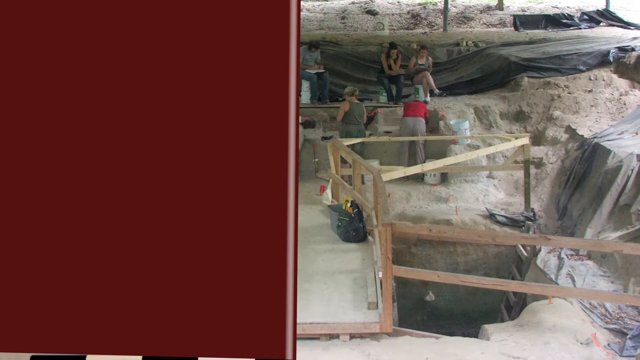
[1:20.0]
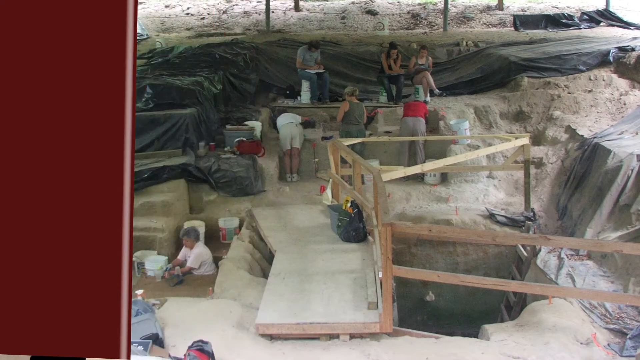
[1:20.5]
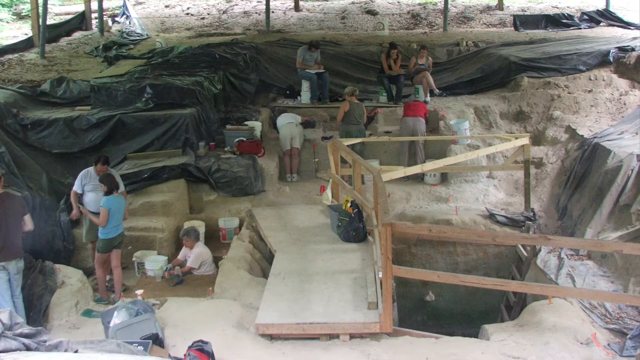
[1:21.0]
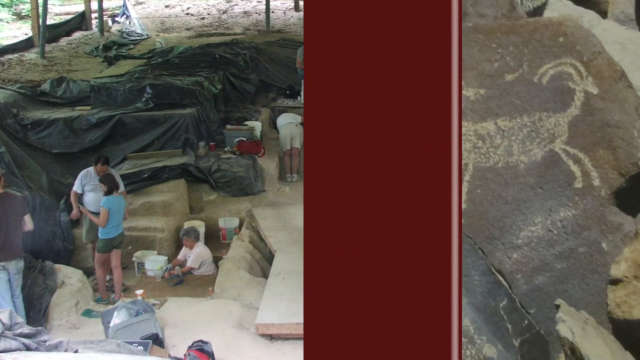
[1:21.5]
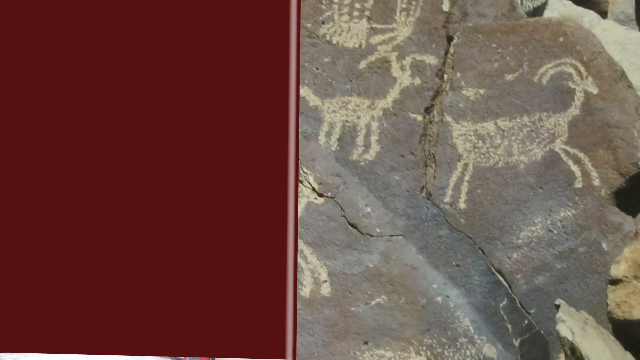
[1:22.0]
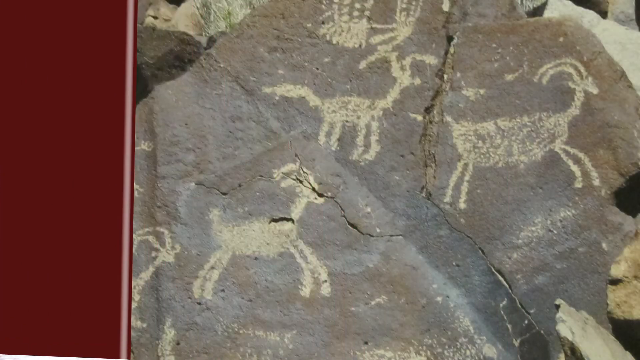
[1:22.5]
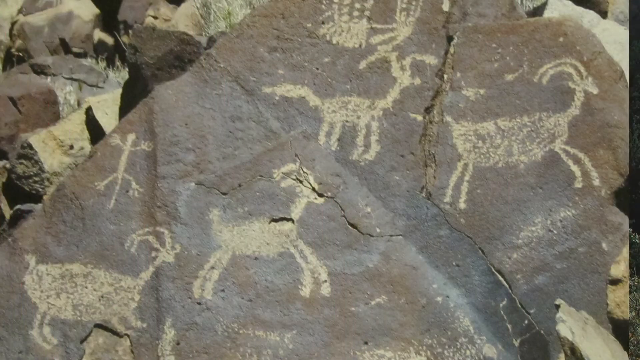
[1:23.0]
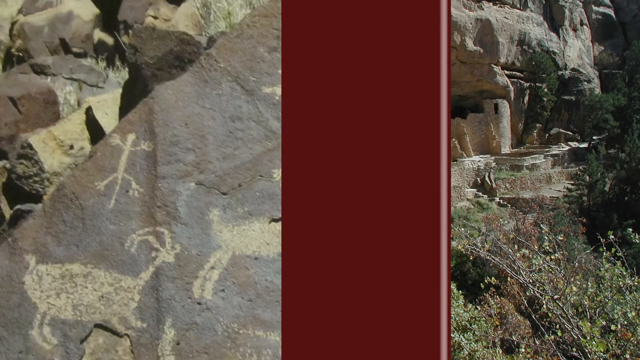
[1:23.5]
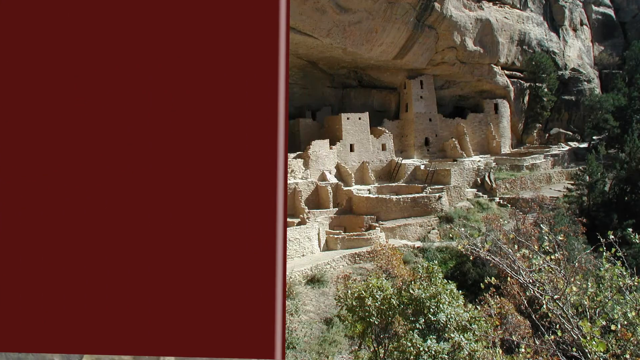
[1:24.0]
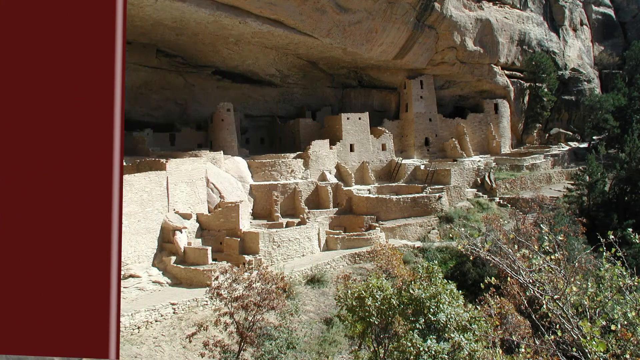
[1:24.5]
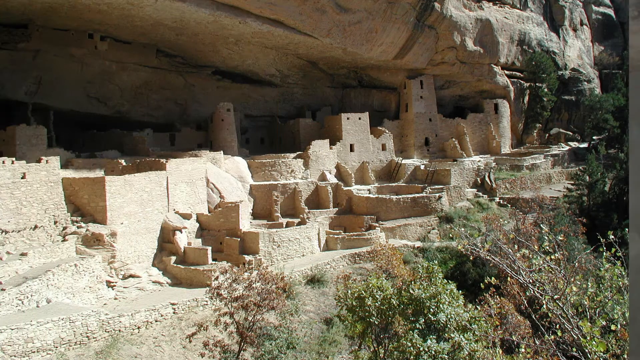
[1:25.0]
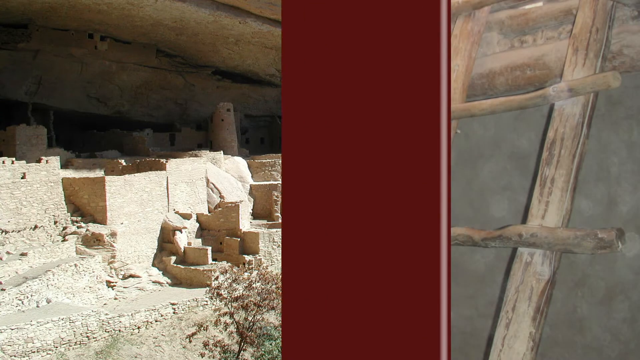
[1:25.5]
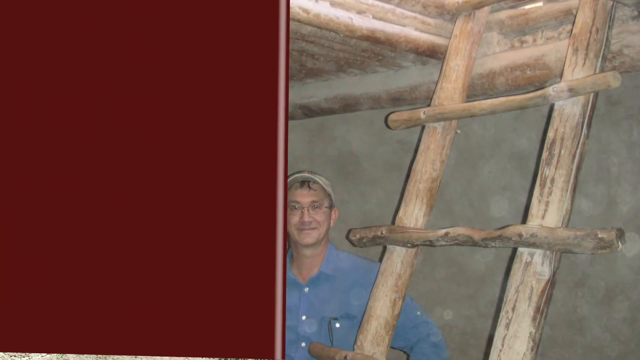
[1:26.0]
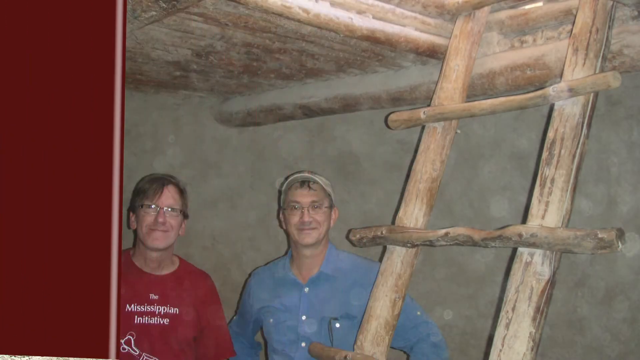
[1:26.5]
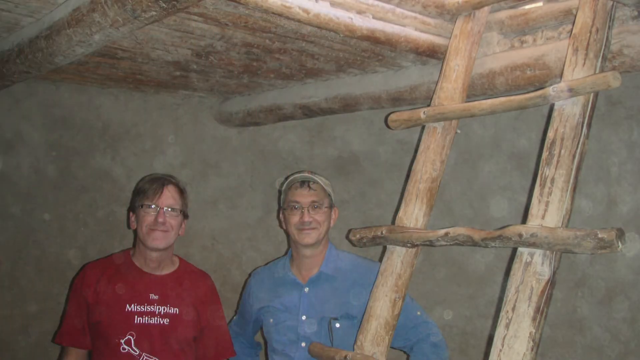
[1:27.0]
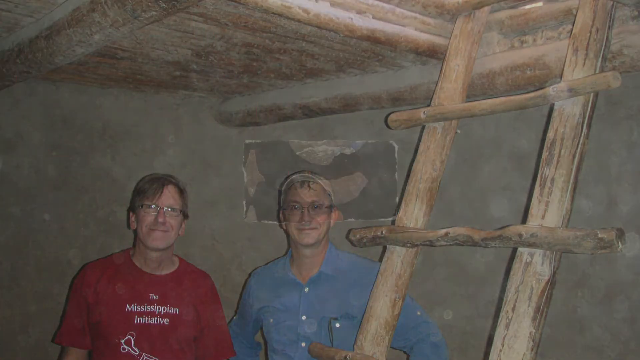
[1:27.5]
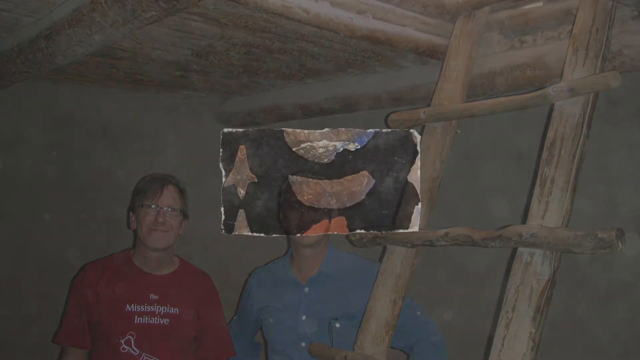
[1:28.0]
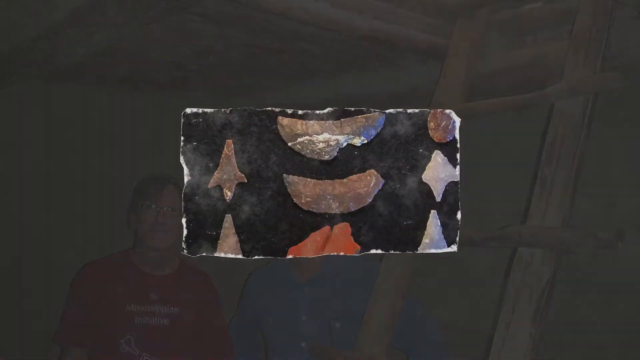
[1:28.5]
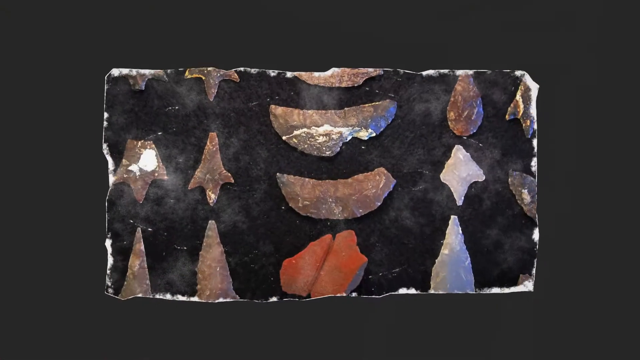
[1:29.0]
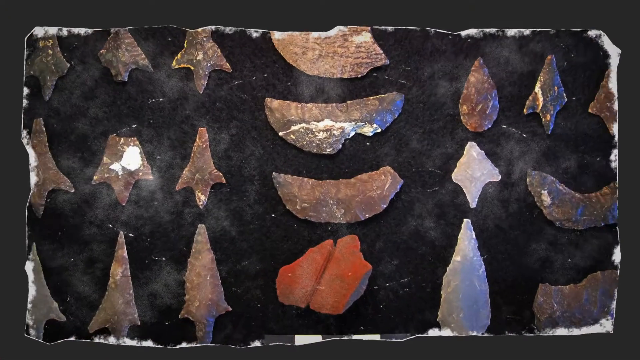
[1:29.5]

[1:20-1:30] A photograph of the archaeological dig appears, with the screen divided into rough halves: a simple maroon background on the left, and on the right a view from above of several archaeology students sitting in chairs, pondering something in front of them, possibly sifting. Two or three dig workers stand just below them with their backs to the camera. The area is covered in plastic sheeting and delineated by pieces of wood forming crude fences. Various views of the dig follow: a rock with ancient drawings, a town, two men standing to the left of a ladder, and some flint pieces.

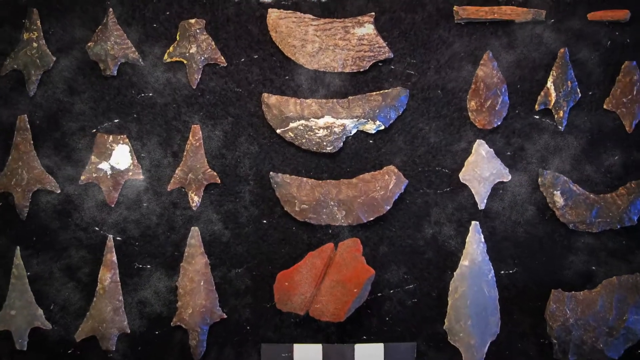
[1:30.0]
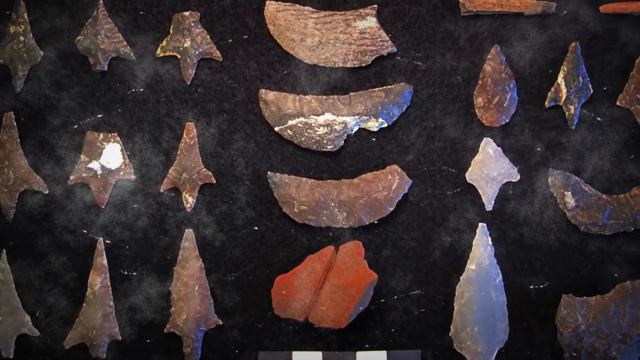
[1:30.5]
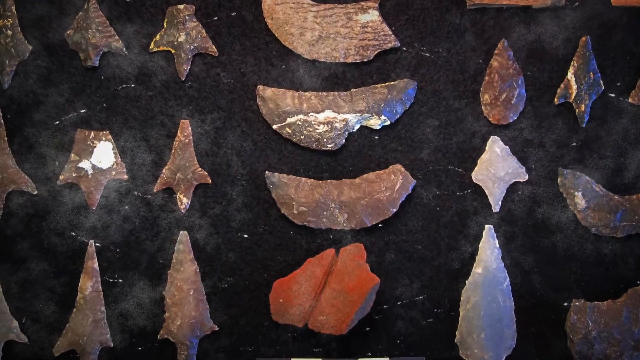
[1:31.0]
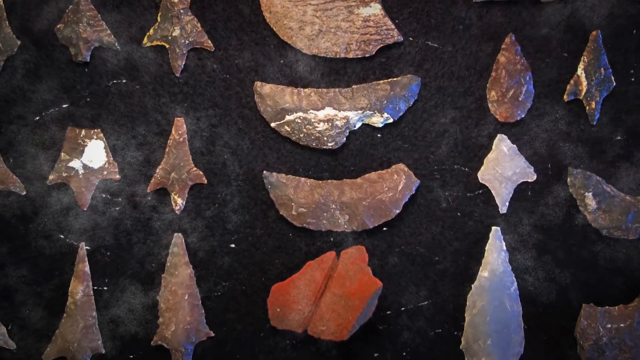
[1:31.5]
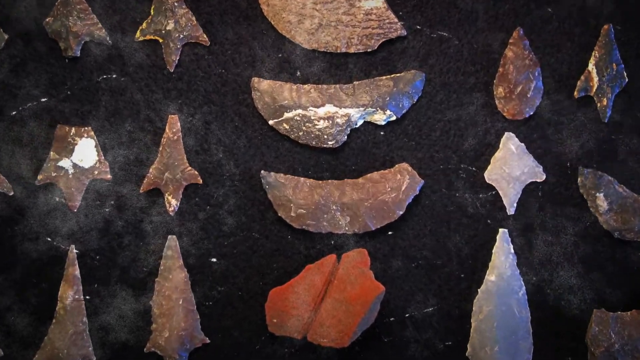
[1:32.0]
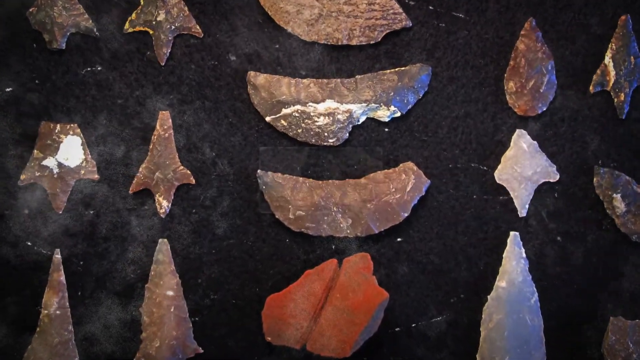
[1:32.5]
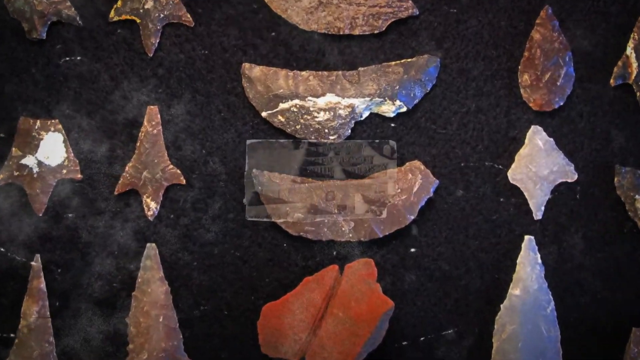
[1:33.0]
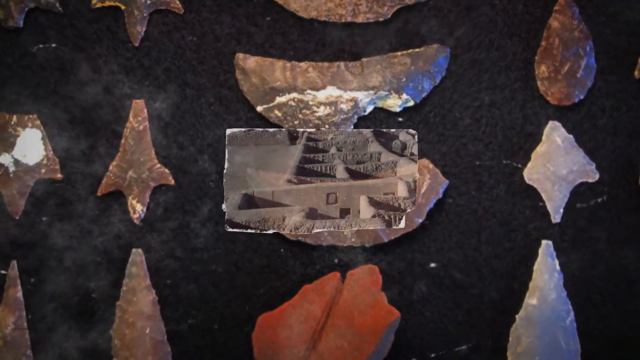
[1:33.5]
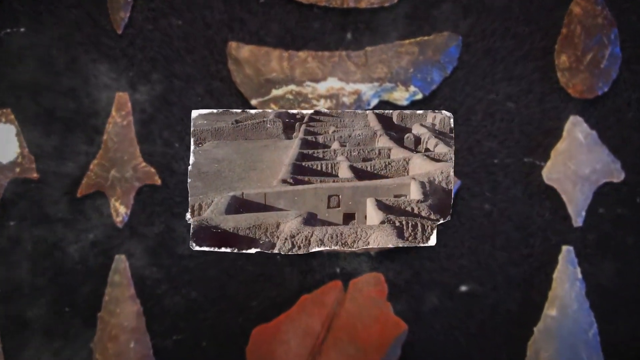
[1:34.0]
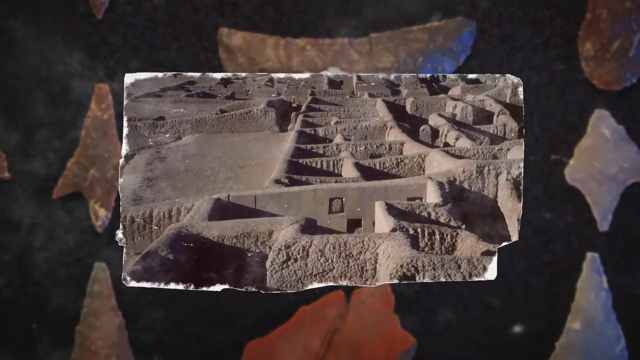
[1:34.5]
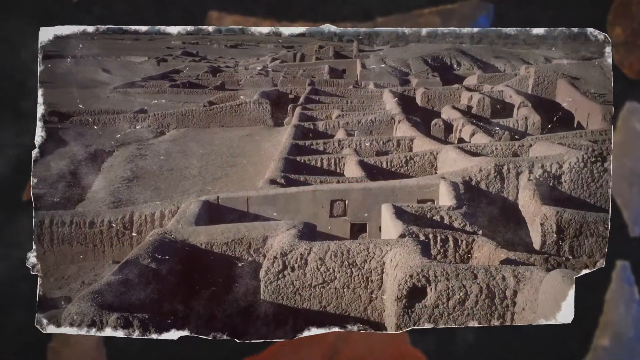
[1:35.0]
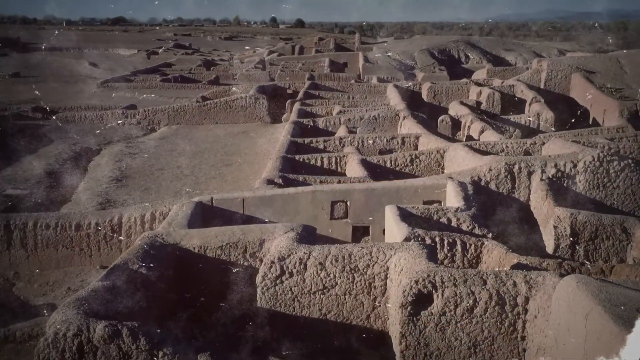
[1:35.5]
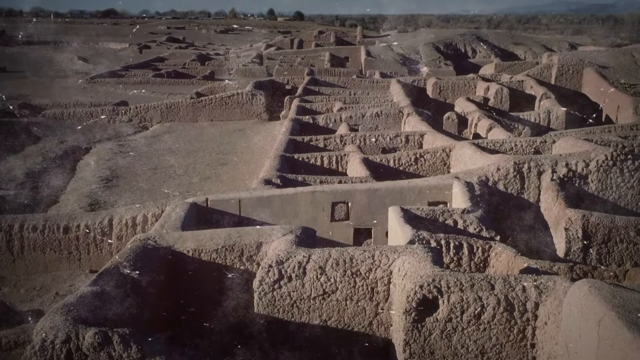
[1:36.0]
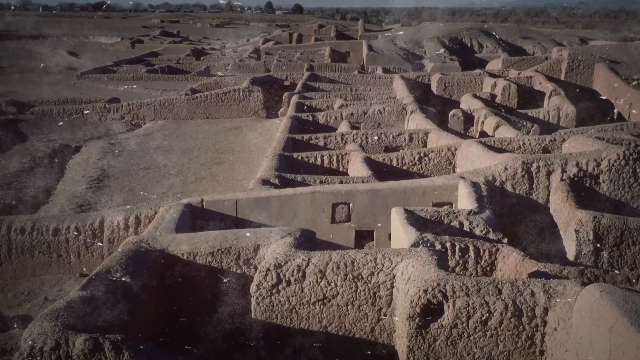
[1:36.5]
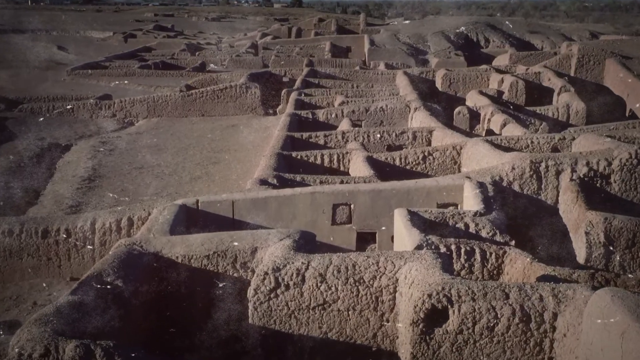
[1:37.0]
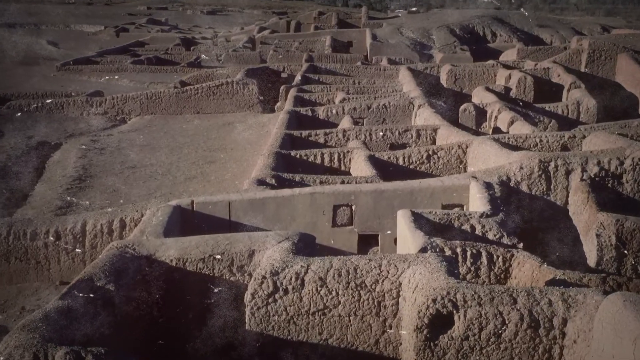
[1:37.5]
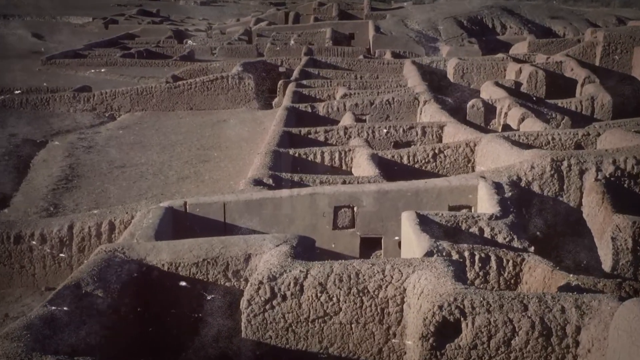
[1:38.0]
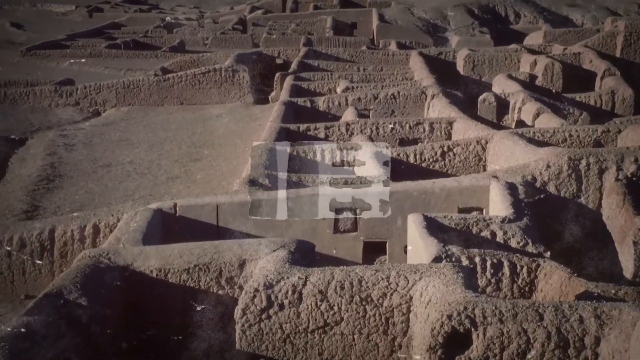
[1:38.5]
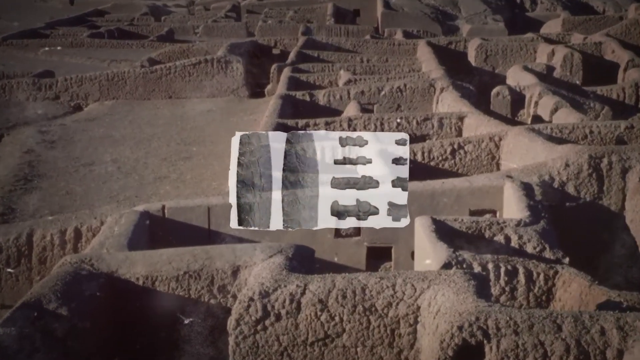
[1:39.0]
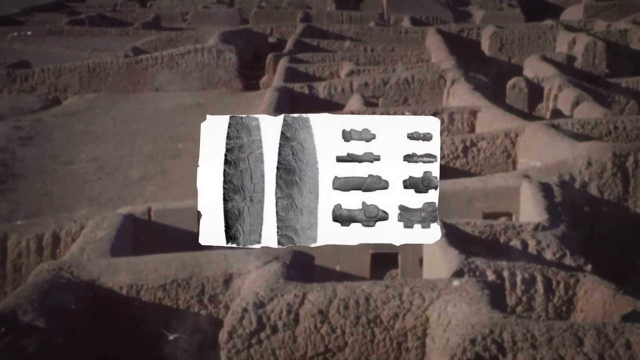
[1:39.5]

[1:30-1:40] A picture of flint pieces, colored white, brown, orange and black, appears, and the camera zooms into them. The view switches to an ancient village that has clearly been excavated: the walls of the different houses are visible, no roofs remain, and the village stretches into the background. The camera zooms in on it, then the view changes to more artifacts retrieved by archaeologists.